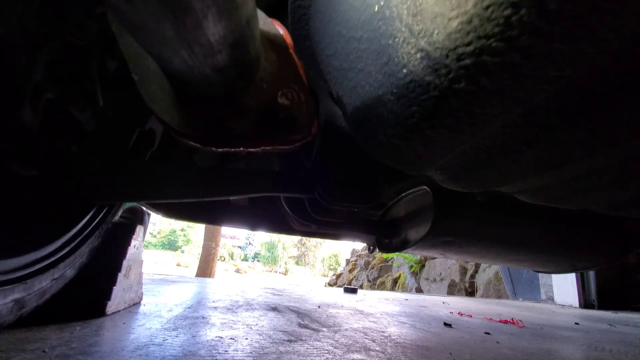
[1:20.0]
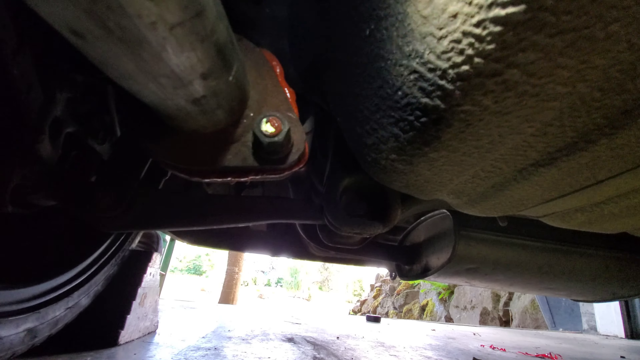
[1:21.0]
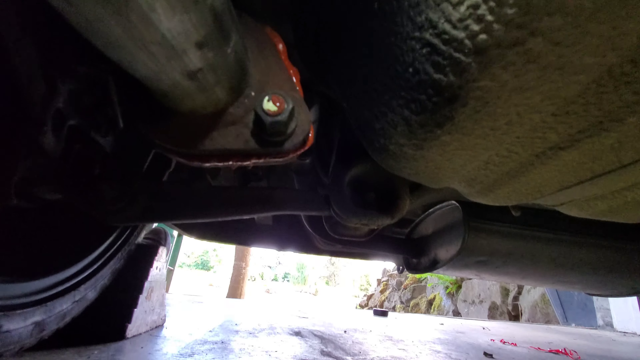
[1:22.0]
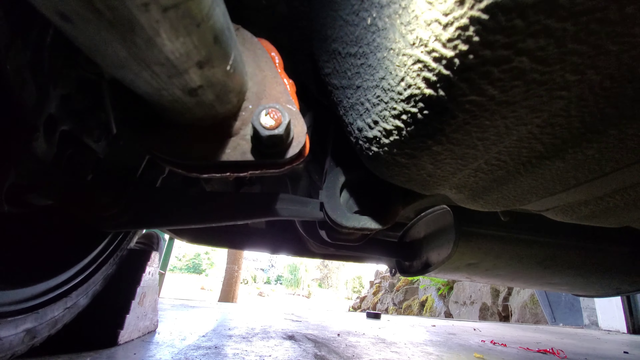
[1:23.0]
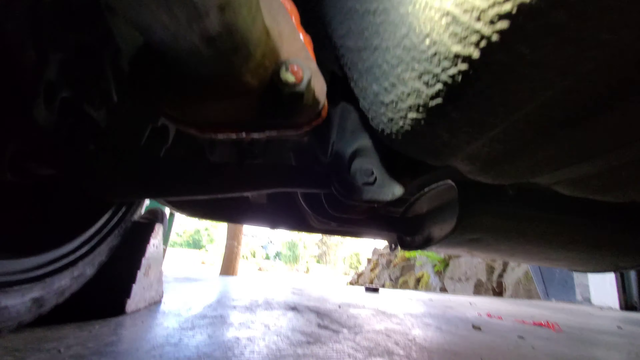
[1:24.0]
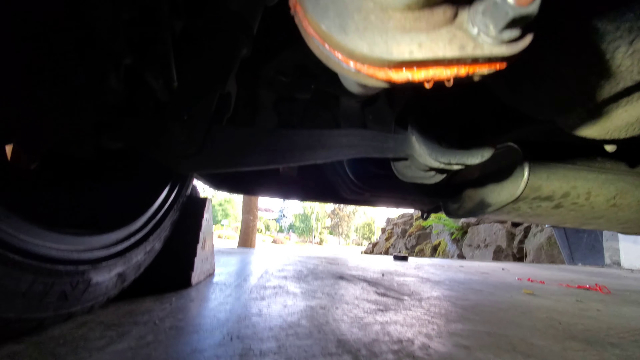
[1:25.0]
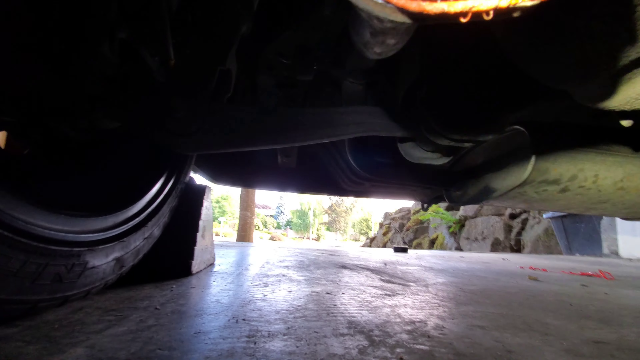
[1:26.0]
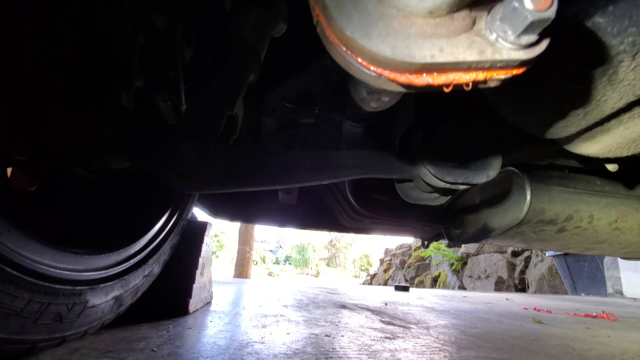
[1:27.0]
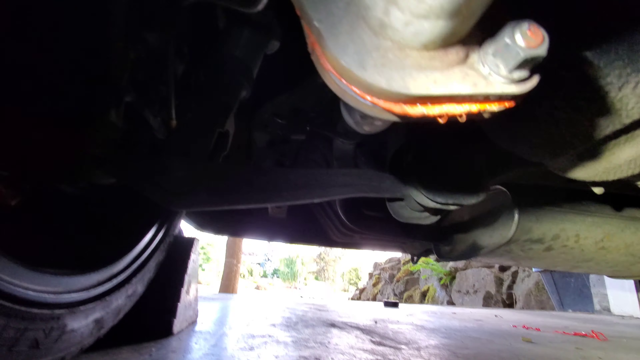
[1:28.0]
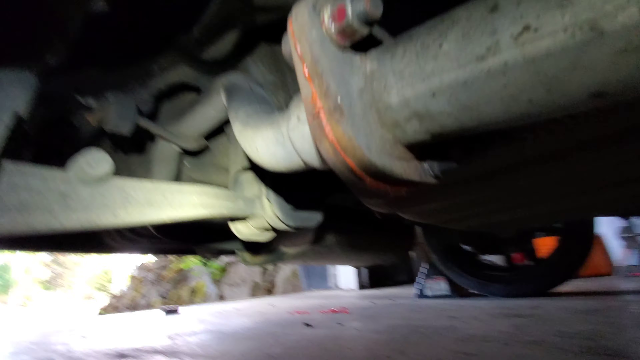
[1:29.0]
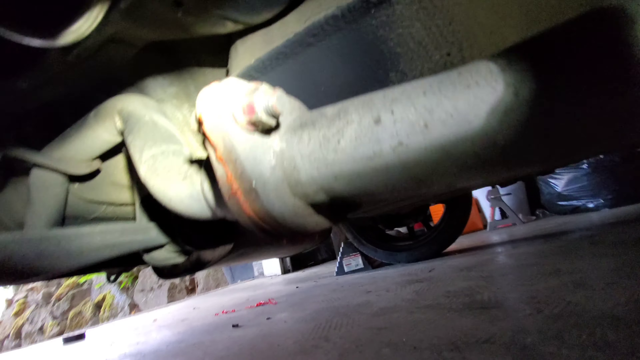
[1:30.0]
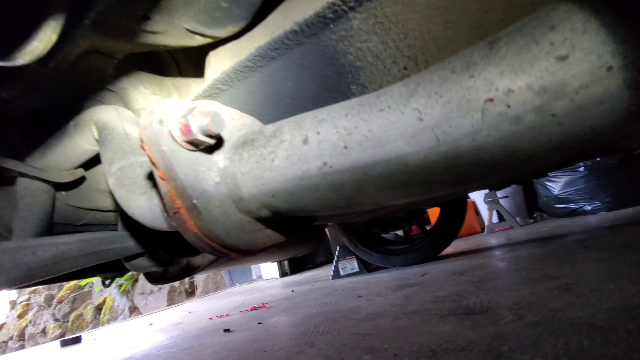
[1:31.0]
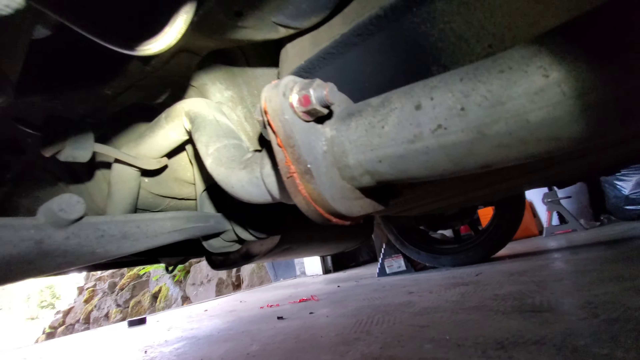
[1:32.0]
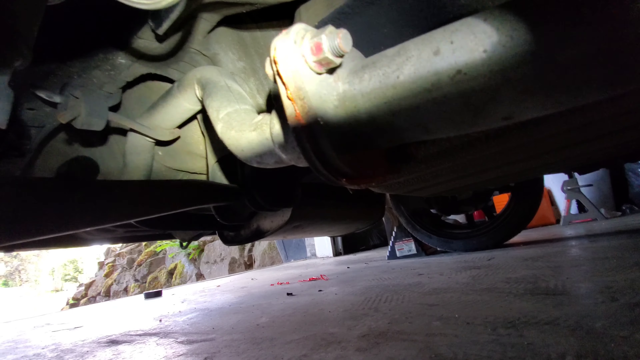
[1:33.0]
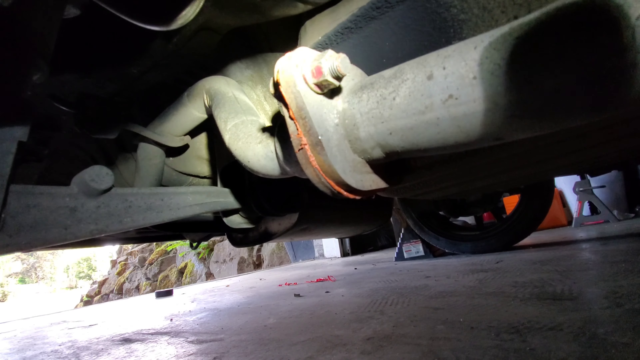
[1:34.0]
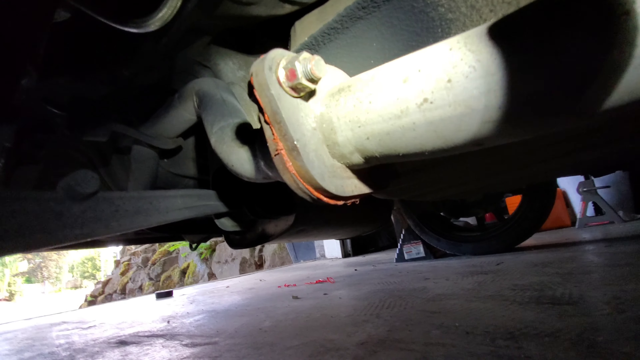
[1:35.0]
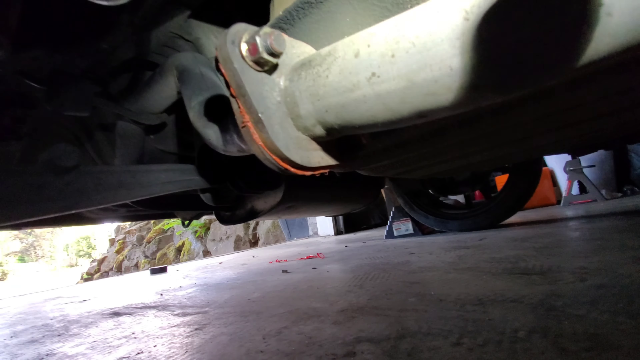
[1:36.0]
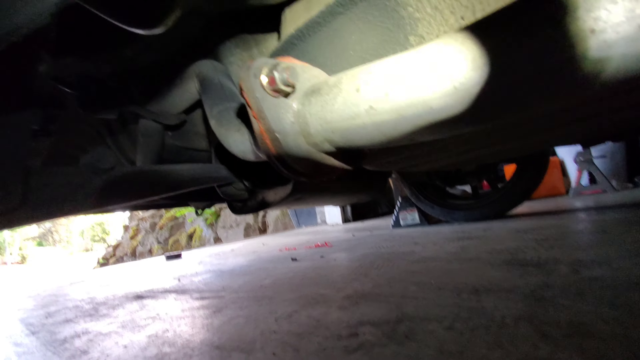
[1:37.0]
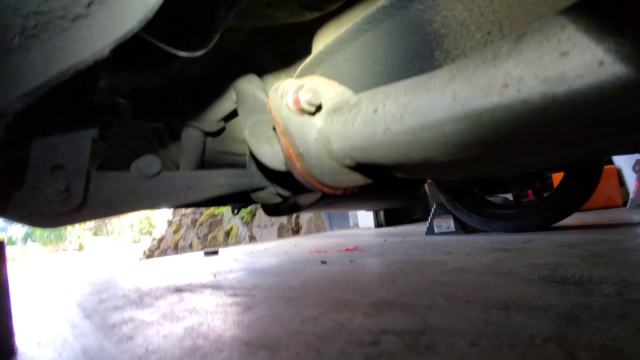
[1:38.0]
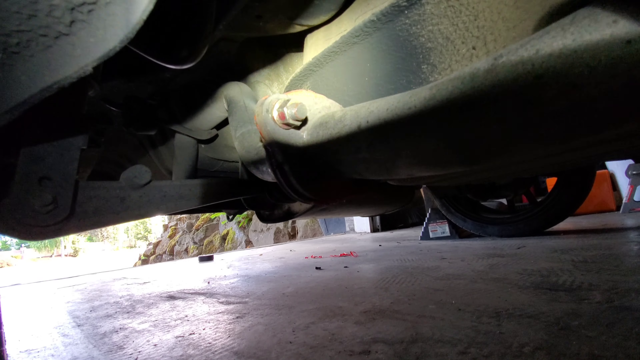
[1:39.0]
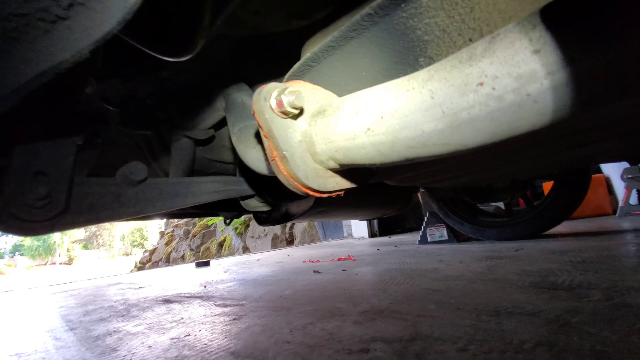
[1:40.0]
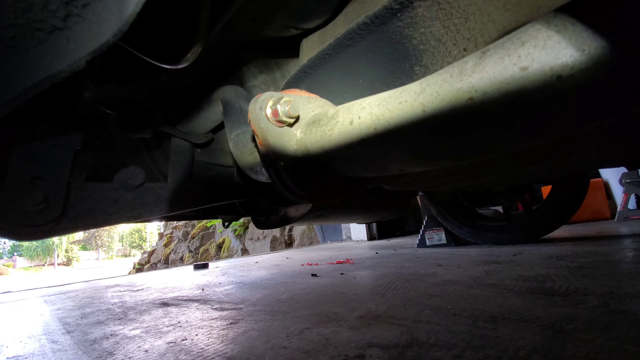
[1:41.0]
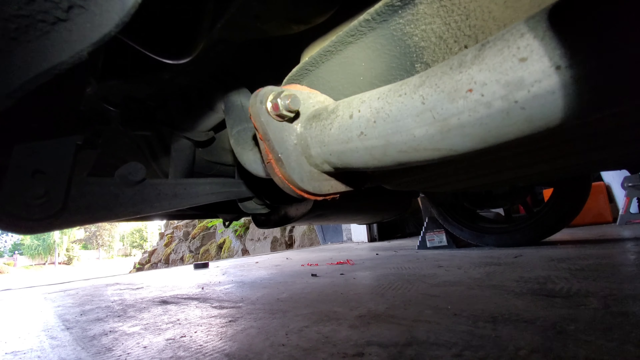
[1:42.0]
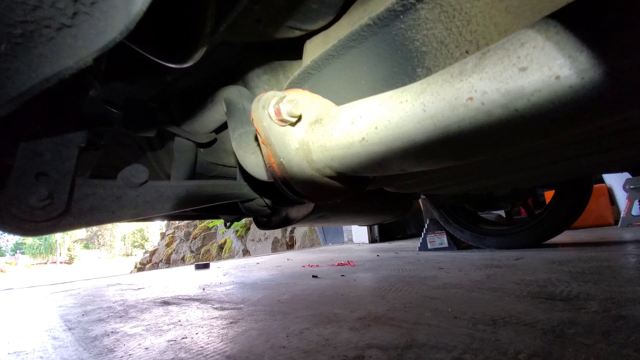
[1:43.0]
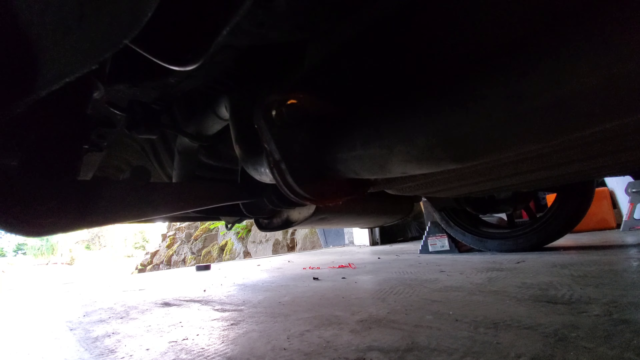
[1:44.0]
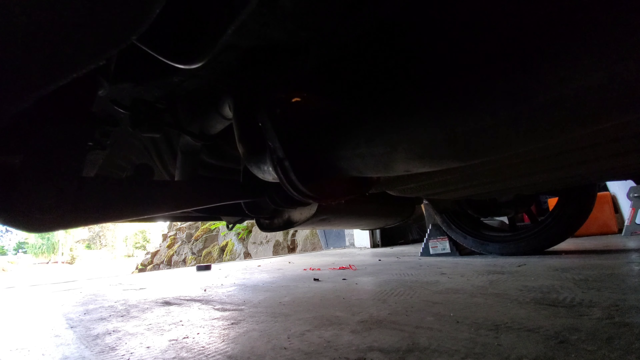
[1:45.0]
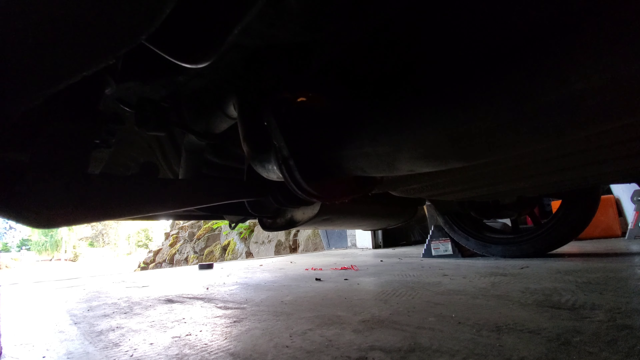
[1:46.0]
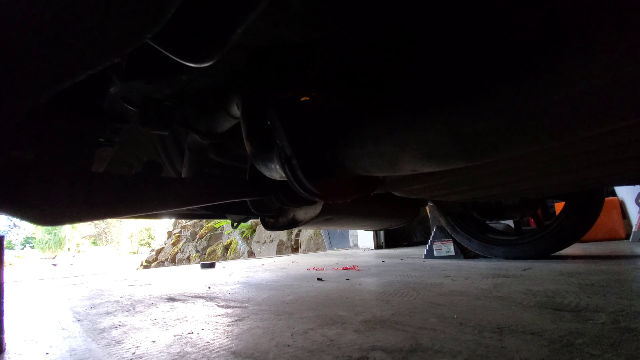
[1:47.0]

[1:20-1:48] The view is of the underside of the vehicle, which has been raised slightly off the ground using some blocks. A tire is on the left of the screen, and above is a triangular-shaped piece of metal attached to a tube, with some bolts tightened on it. An orange liquid is just visible all around the edges of the joint. A light illuminates this joint, looking first at the back of it and then moving along to its left-hand side, the torch lighting up the section underneath the car. The view then shifts to show another tire on the right-hand side of the vehicle, and it looks like the front of the vehicle. Outside can be seen from underneath the vehicle: it looks to be a garage with the door open, showing a driveway, with some rocks and some plants on the right-hand side.